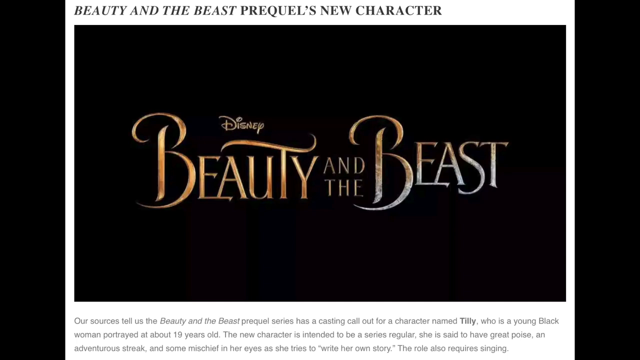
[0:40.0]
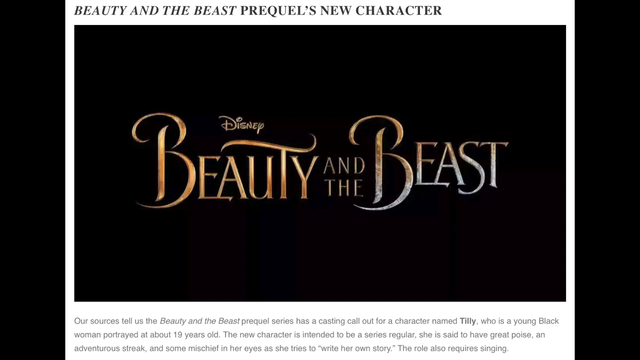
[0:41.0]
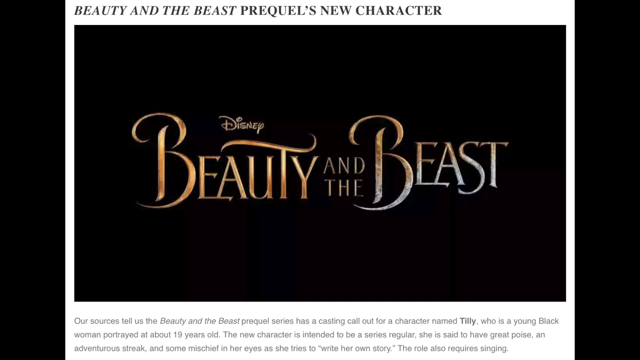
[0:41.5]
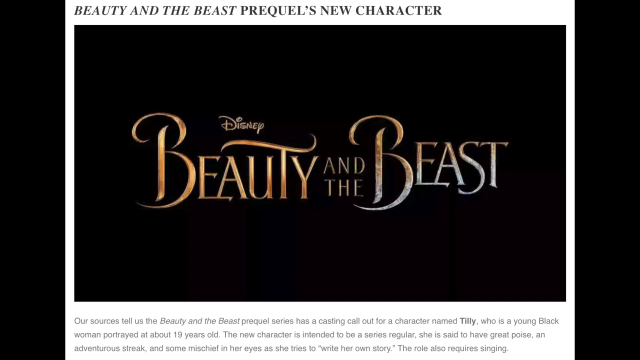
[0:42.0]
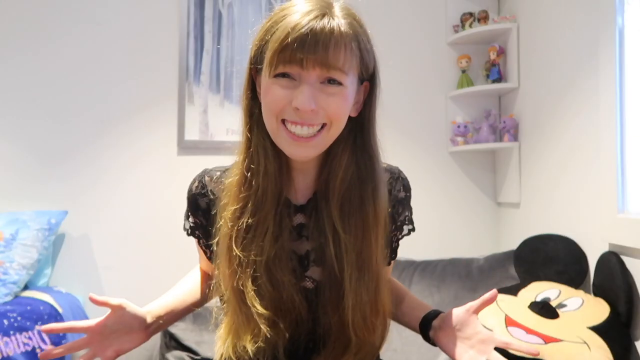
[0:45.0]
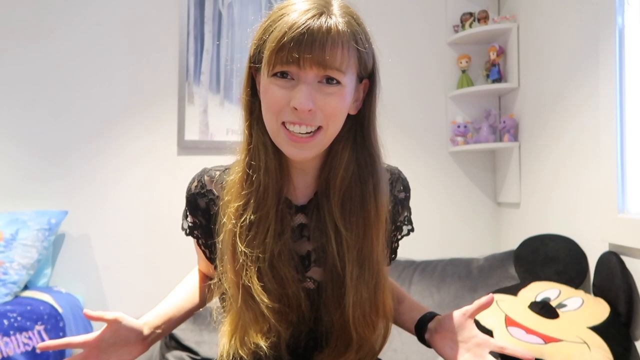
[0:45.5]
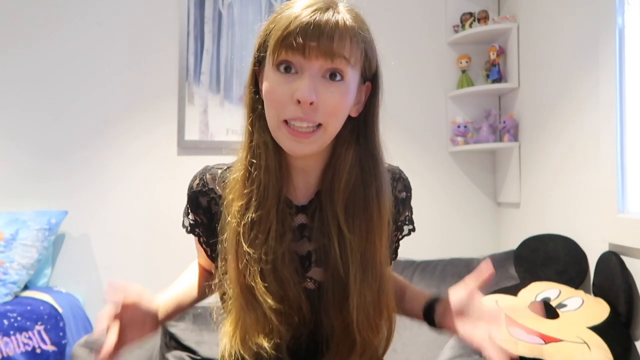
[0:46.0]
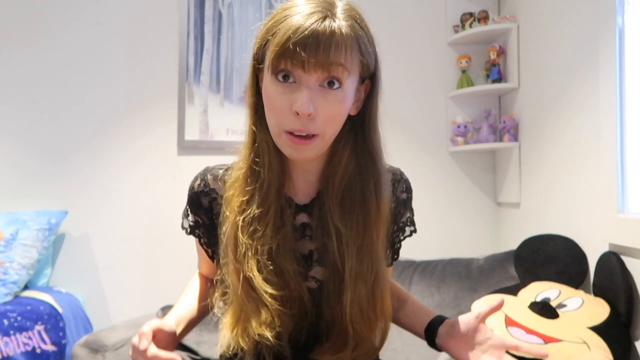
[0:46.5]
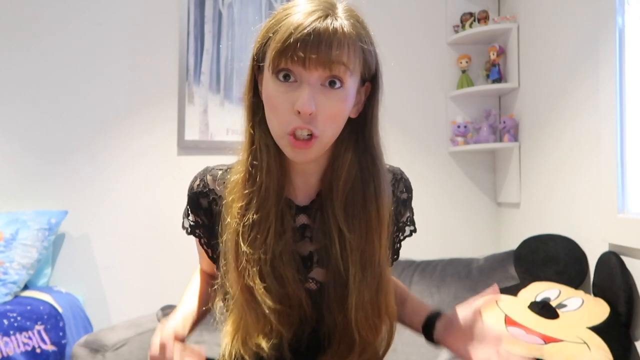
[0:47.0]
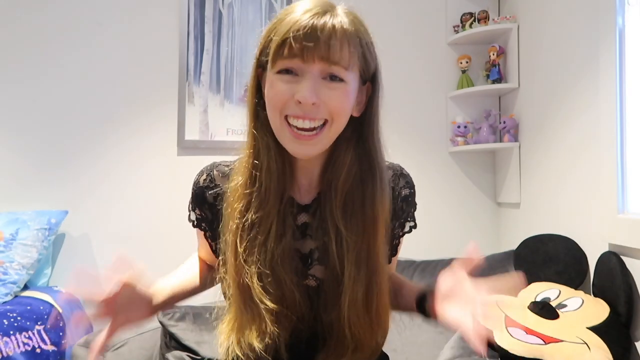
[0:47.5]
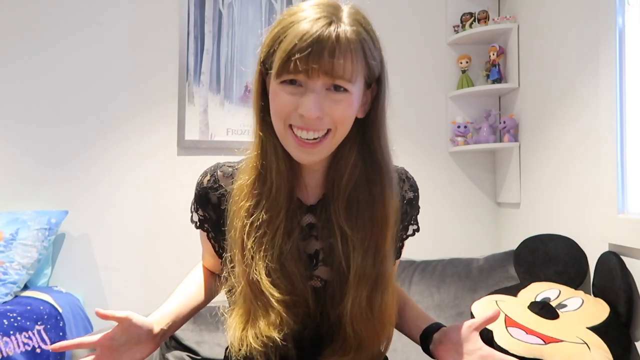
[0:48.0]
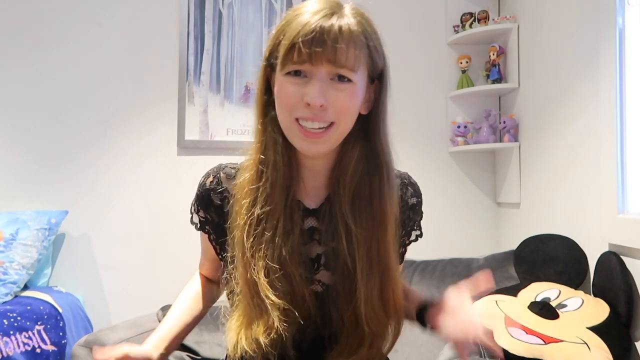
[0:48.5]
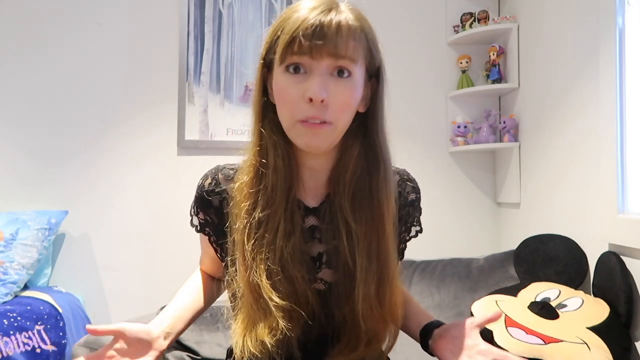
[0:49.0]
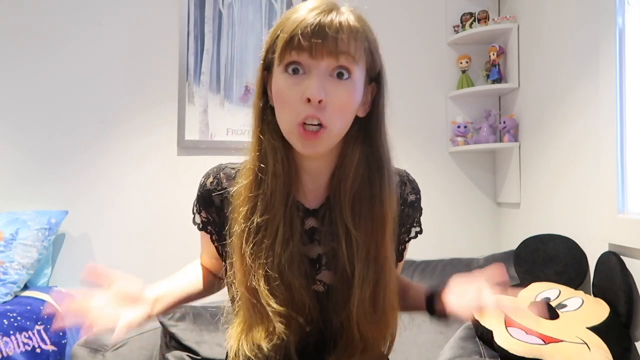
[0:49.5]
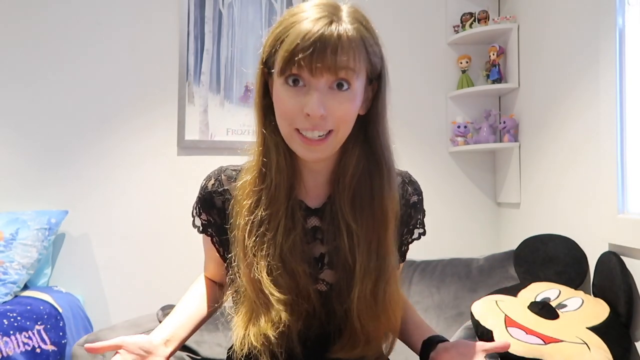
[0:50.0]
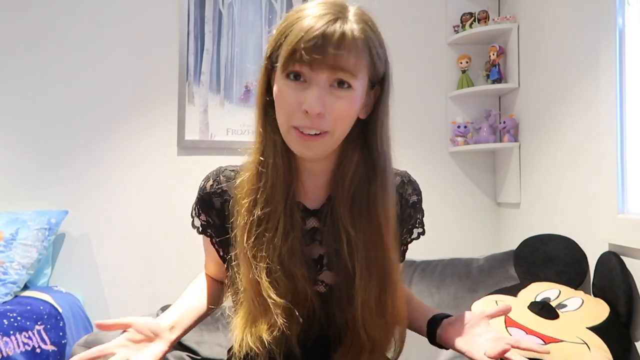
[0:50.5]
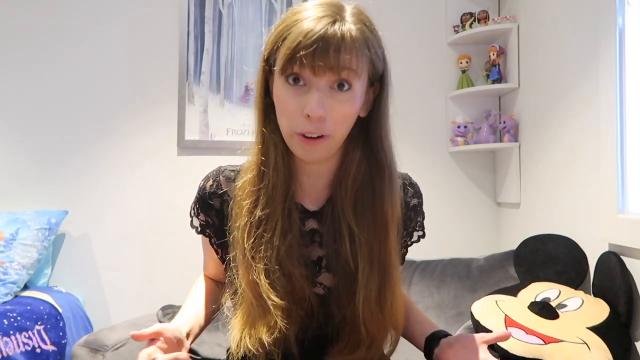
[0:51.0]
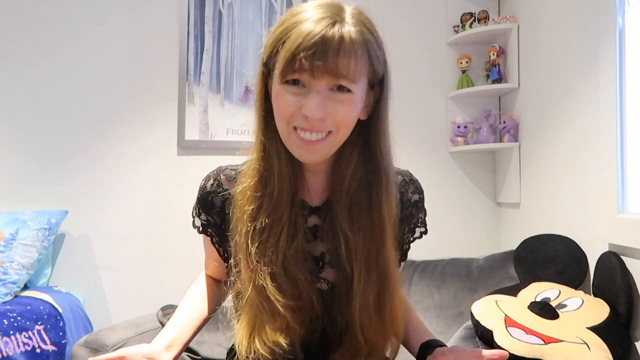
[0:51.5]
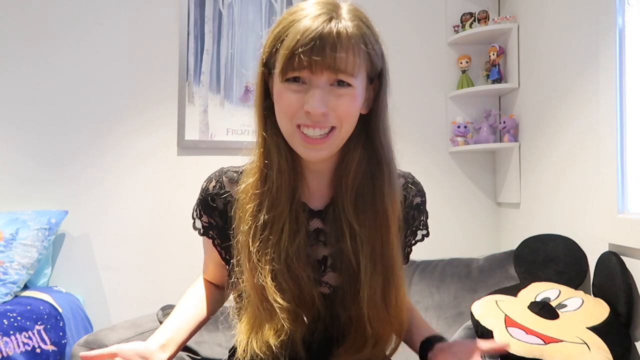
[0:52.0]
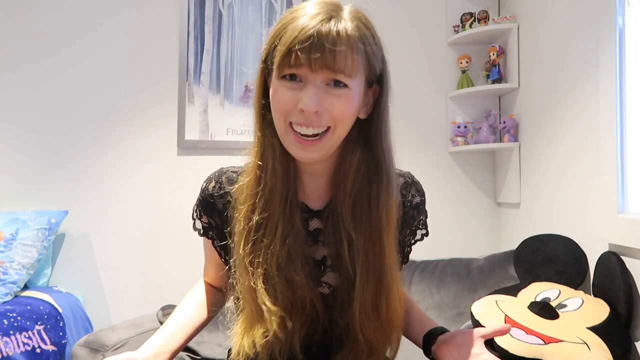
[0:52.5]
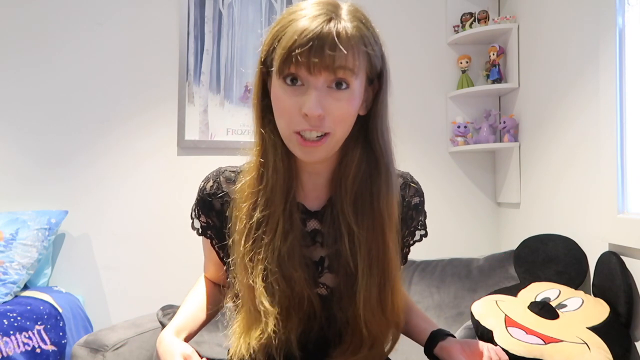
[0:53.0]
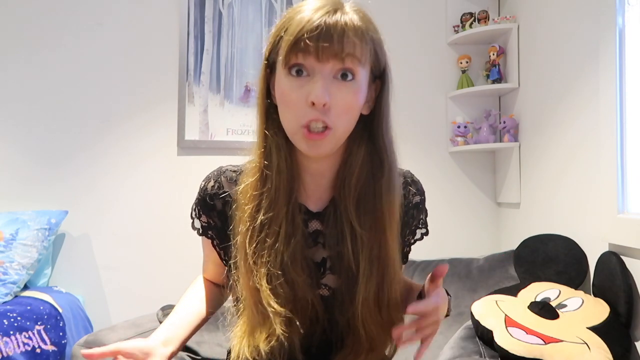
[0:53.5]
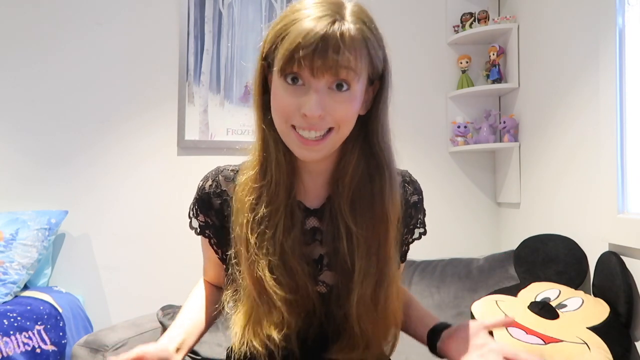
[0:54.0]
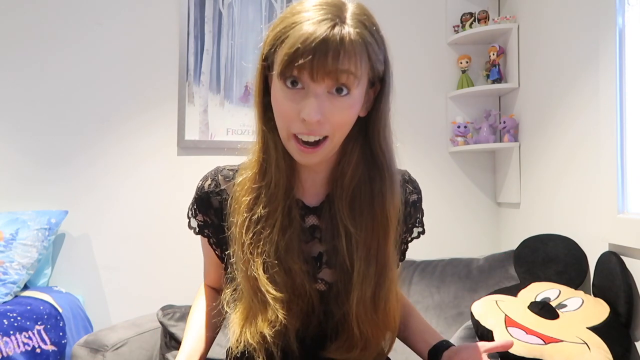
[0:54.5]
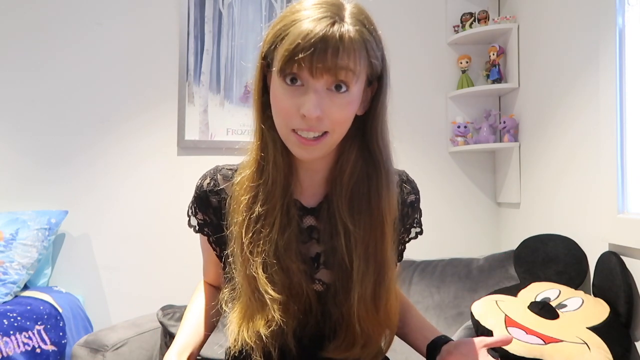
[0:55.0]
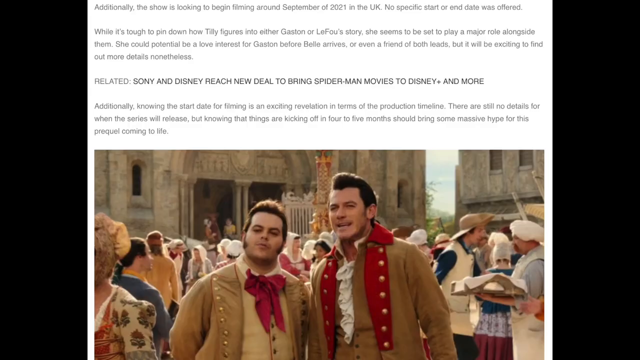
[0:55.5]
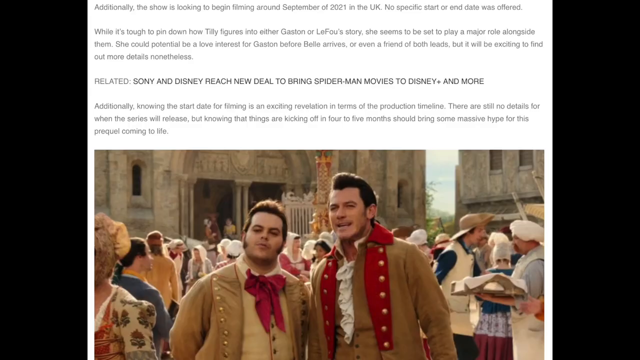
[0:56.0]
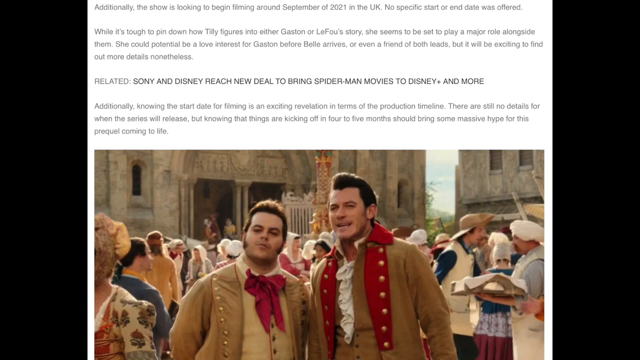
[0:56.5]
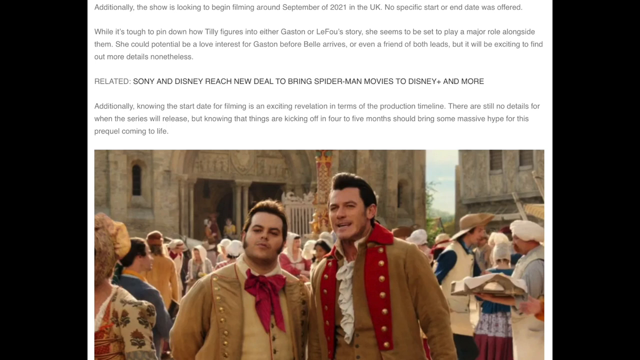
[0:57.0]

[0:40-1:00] The word "Disney" is written on screen. A lady talks, gesturing a lot with her hands, then opens her eyes wide. "Disney Beauty and the Beast" is written on screen. A girl in a black top talks at length. The two men from the bushes appear, now without their hats, with a crowd behind them going about its own business. Text reads "Related: Sony and Disney reached new deal to bring Spider-Man movies to Disney Plus and more." Smaller text alongside a picture of the two men reads "Additional, knowing the start for filming is an exciting revelation in terms of the broad production timeline. There is still no details for when the series will release but knowing that things are kicking off in four to five months should bring some massive hype for the prequel coming to life." The girl sits in a room with a collection of Disney dolls, and her bed is covered in Disney comforters.